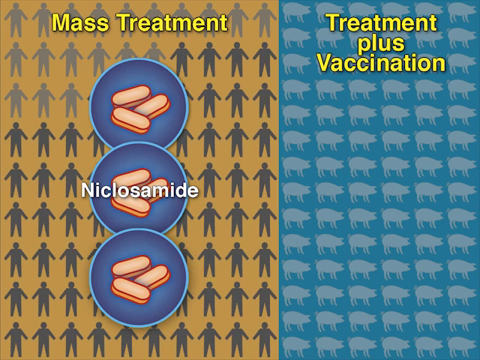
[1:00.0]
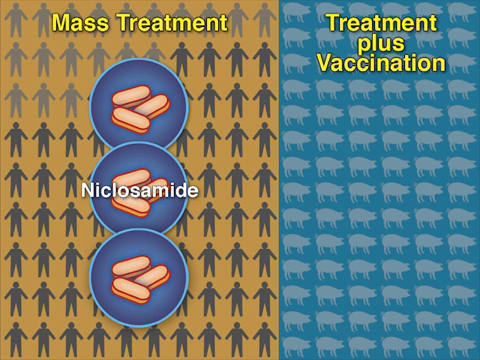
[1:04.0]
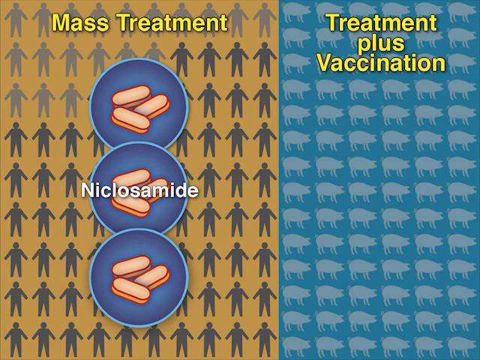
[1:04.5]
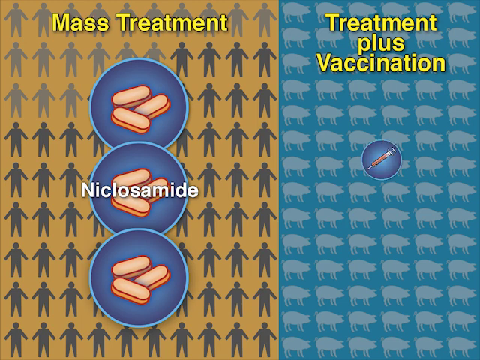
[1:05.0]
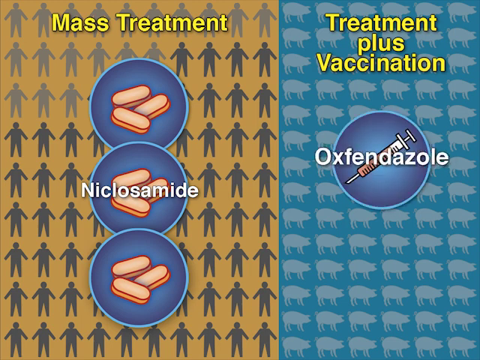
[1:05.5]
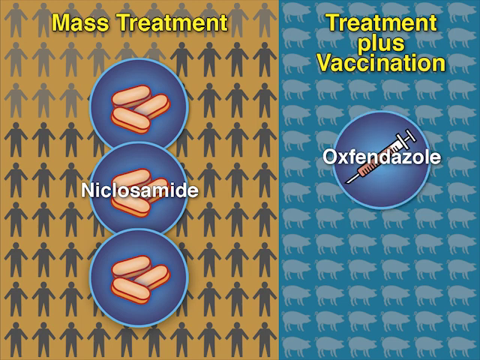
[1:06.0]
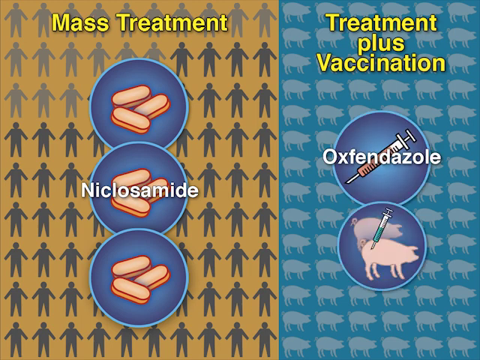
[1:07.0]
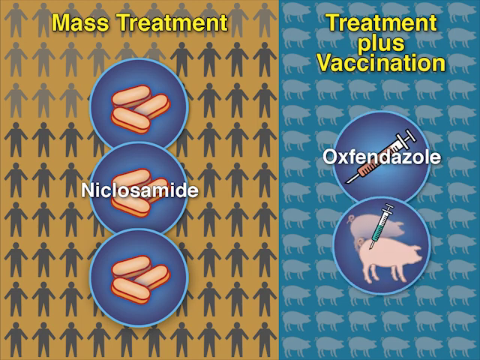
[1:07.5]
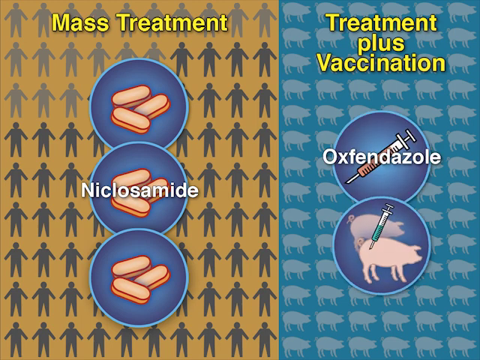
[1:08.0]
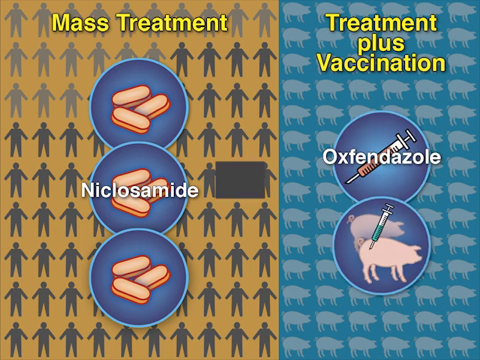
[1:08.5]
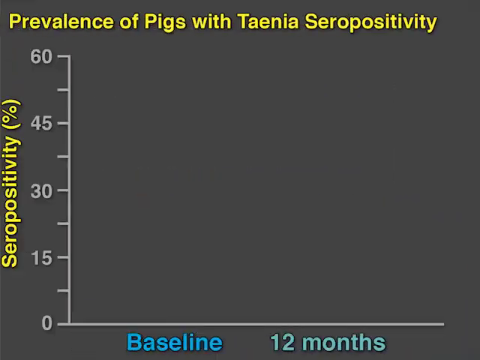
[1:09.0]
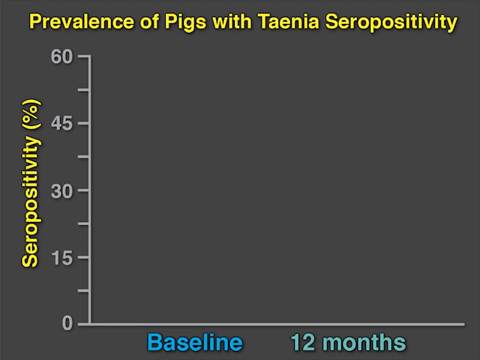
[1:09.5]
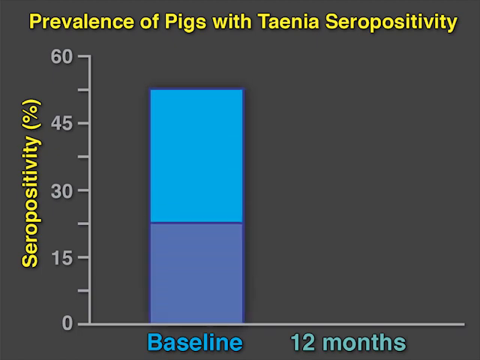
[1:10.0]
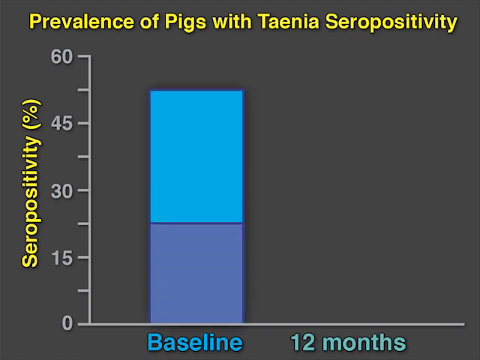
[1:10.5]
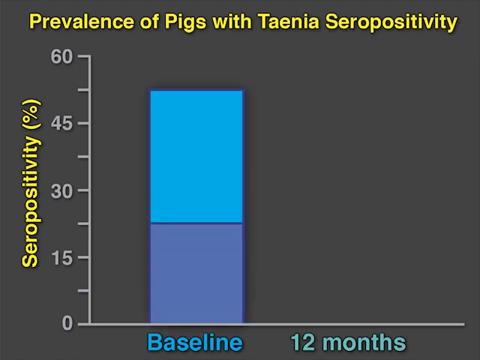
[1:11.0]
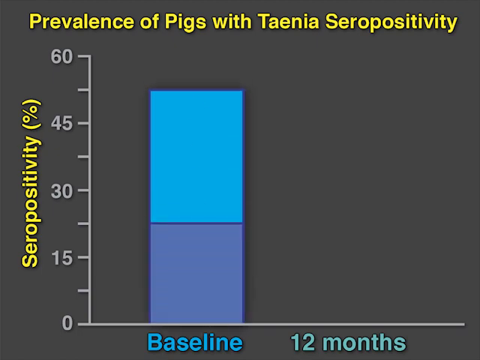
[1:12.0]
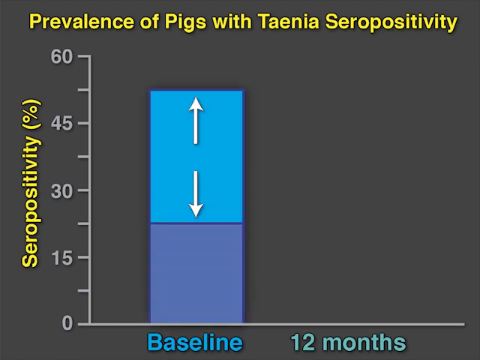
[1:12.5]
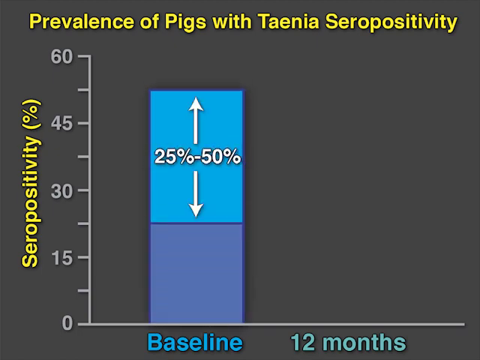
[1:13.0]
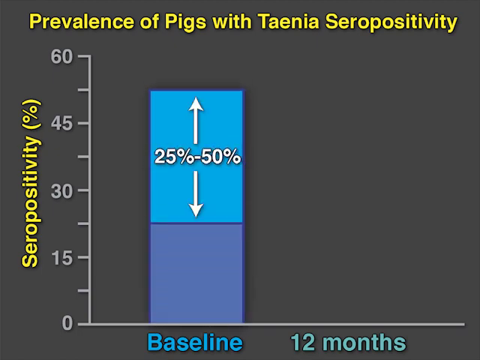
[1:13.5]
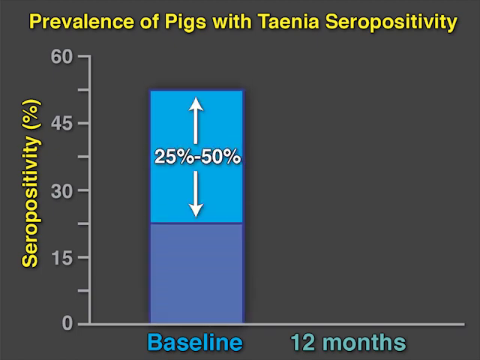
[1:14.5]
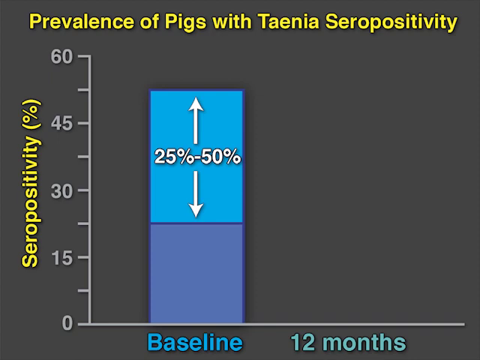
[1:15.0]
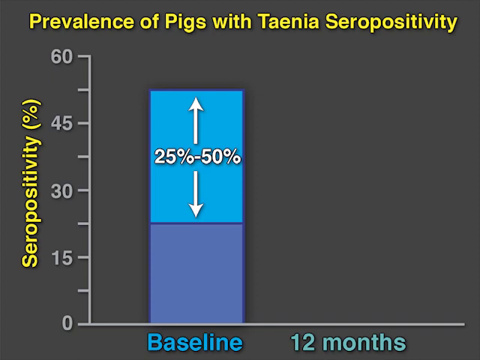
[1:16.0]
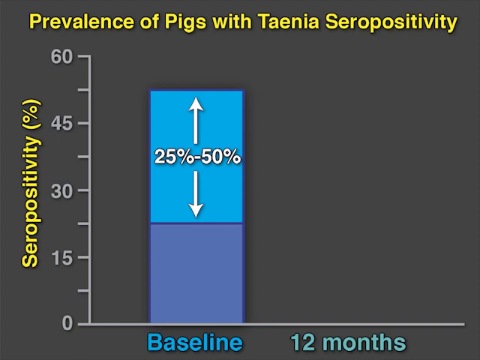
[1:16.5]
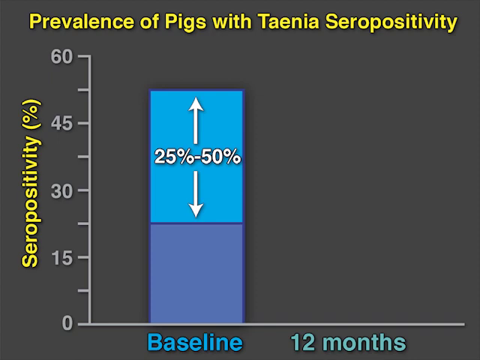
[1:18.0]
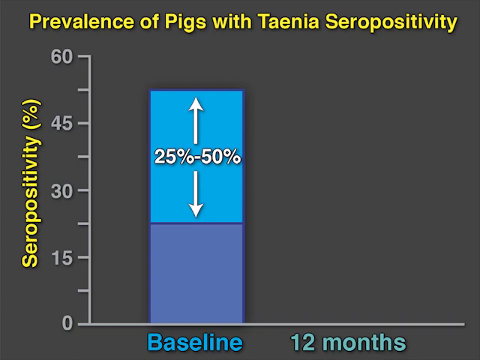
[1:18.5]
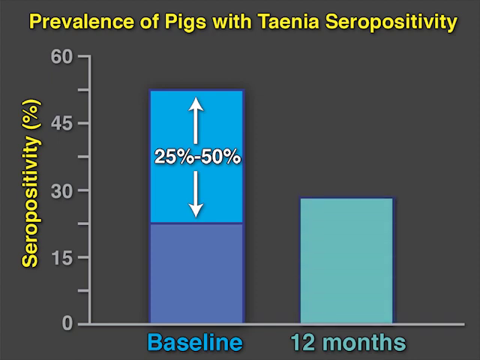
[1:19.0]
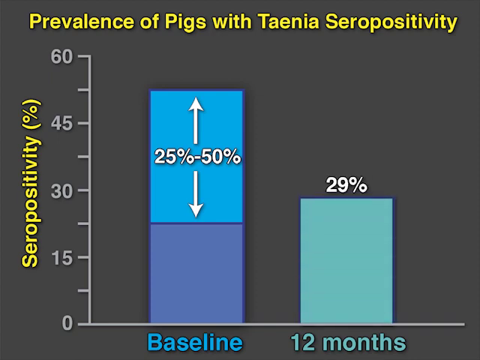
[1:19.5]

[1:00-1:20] Underneath the treatment plus vaccination title, a blue circle appears with the word "oxfendazole" inside and a picture of a syringe, suggesting a vaccination or treatment method. Beneath it appears a circle with two cartoon pigs, with a syringe being inserted into one of them. The next screen has a yellow title reading "prevalence of pigs with Taenia seropositivity" and a graph showing seropositivity on the vertical axis and baseline on the horizontal axis. A bar appears above baseline reading "25% to 50%" and reaches around 50 on the y-axis. A second bar, labelled "12 months", reaches 29%. The bars are light blue; the baseline bar is split vertically into a light purple section and a light blue section, and the 12 months bar is a lighter blue.